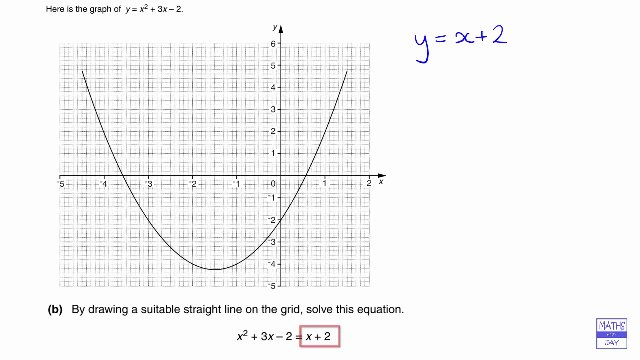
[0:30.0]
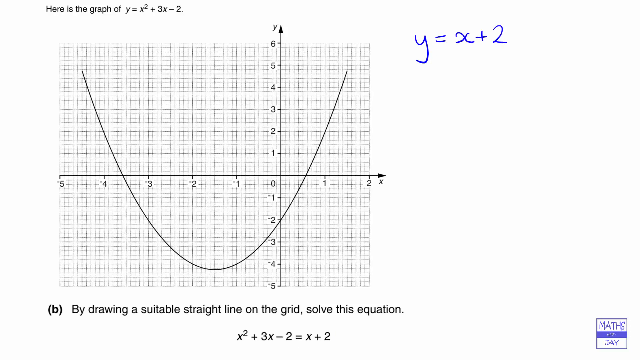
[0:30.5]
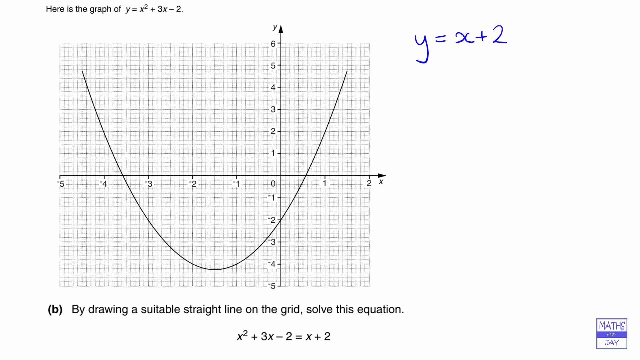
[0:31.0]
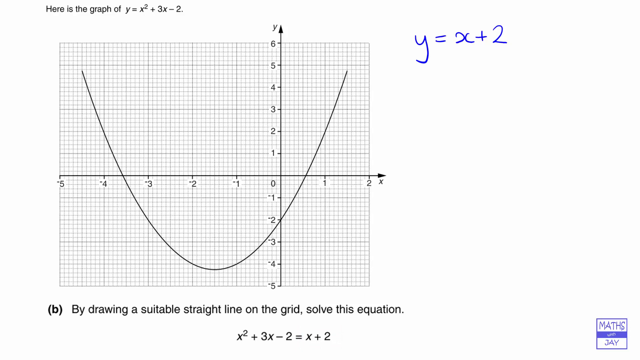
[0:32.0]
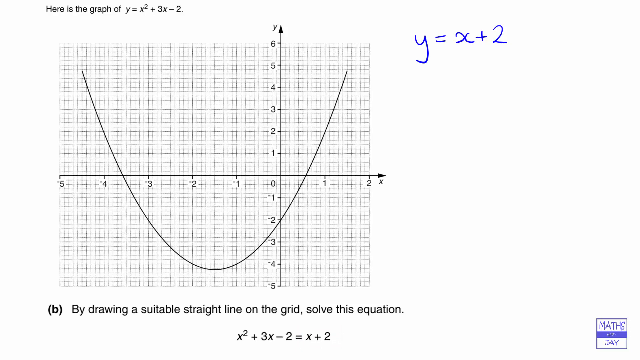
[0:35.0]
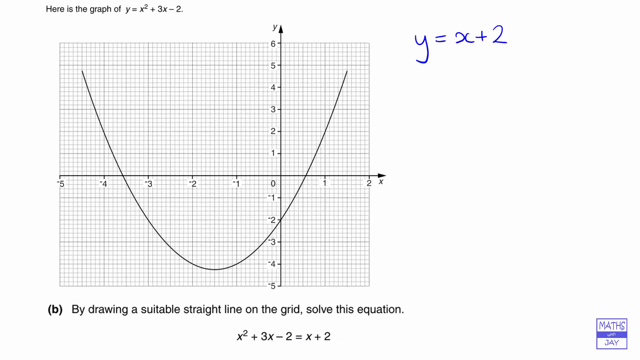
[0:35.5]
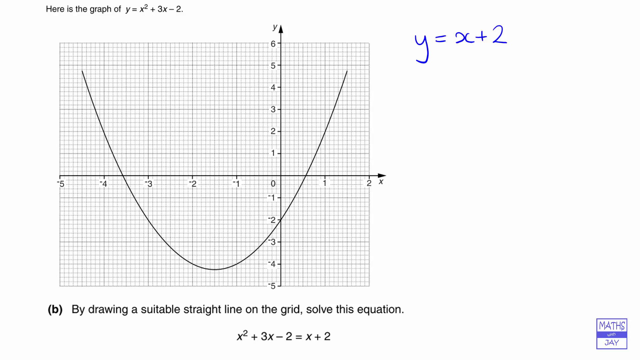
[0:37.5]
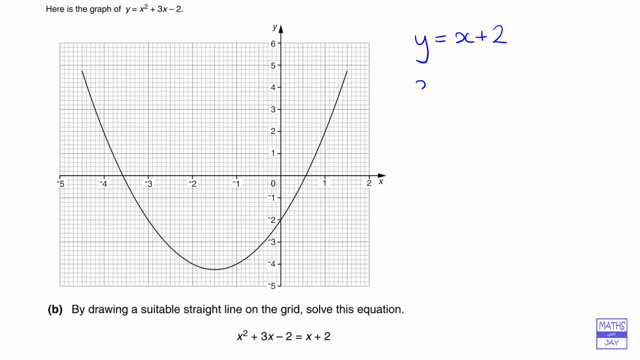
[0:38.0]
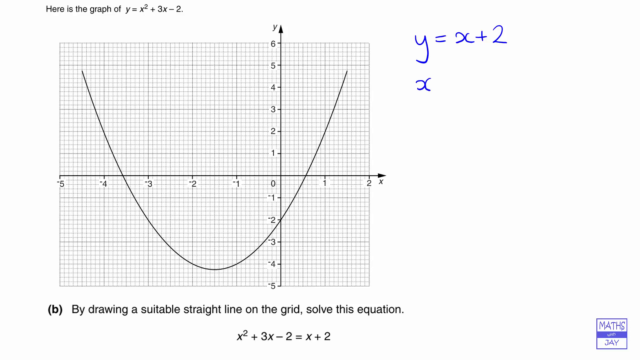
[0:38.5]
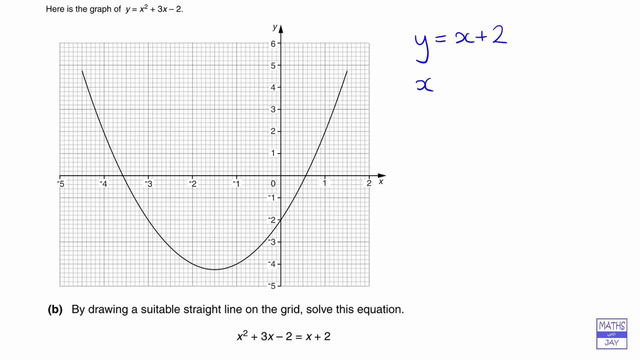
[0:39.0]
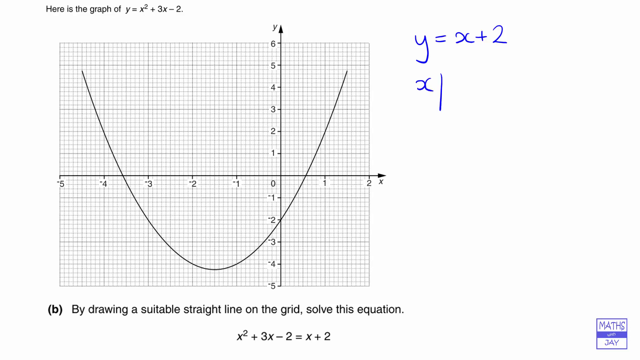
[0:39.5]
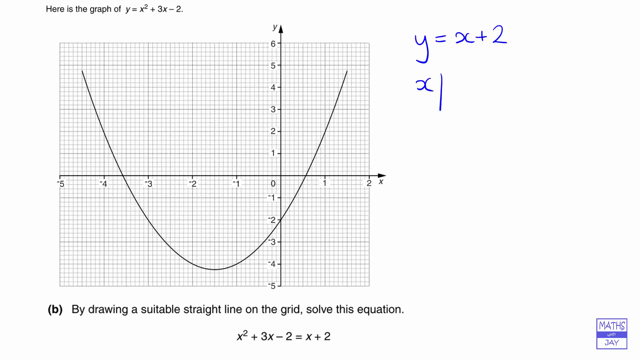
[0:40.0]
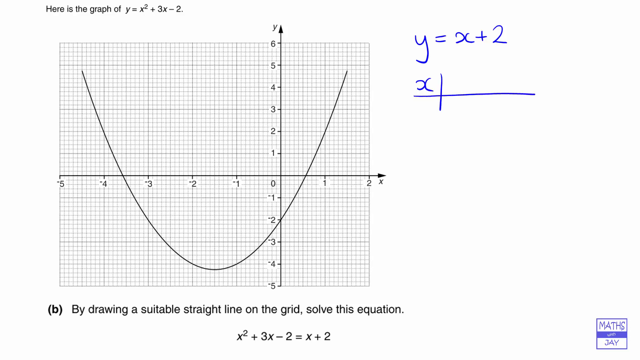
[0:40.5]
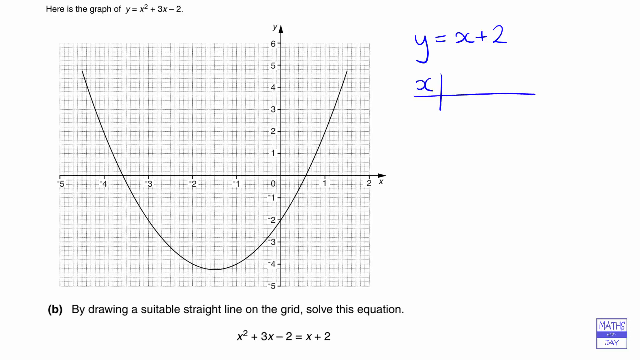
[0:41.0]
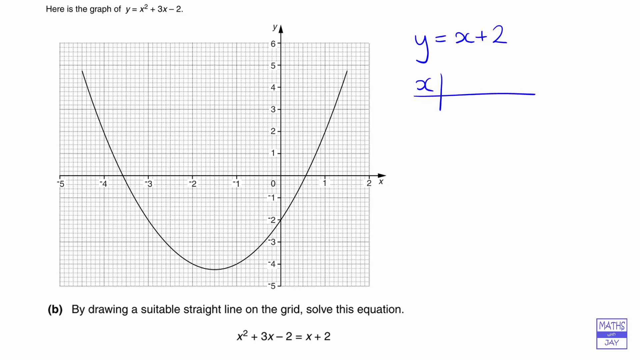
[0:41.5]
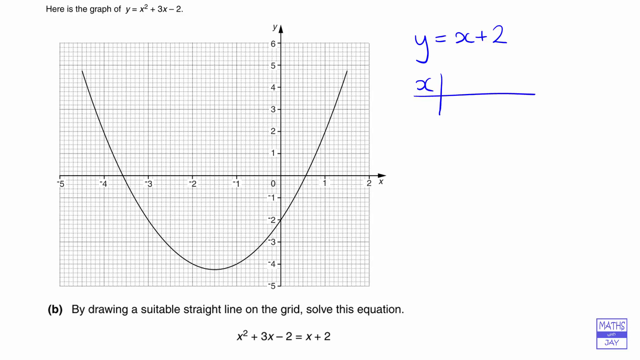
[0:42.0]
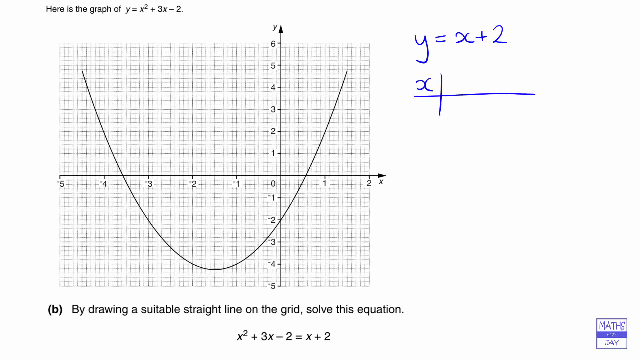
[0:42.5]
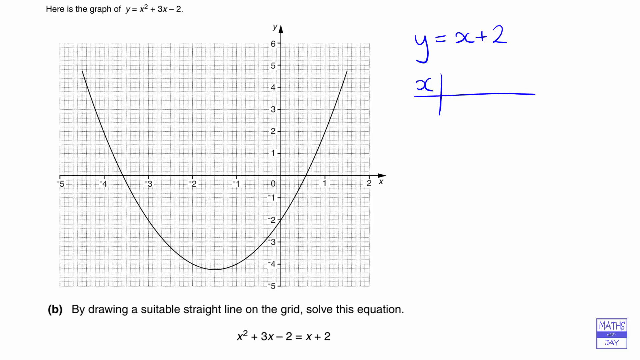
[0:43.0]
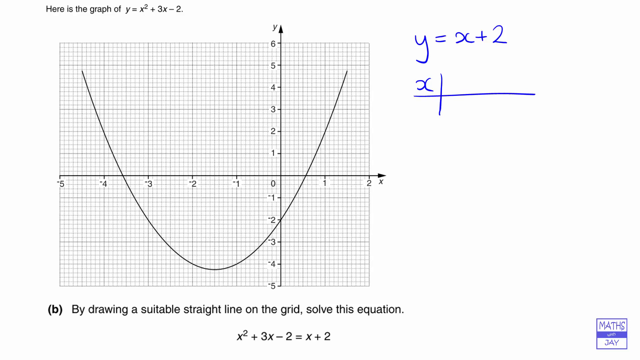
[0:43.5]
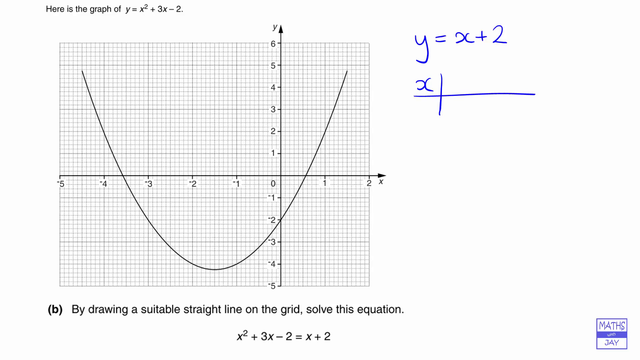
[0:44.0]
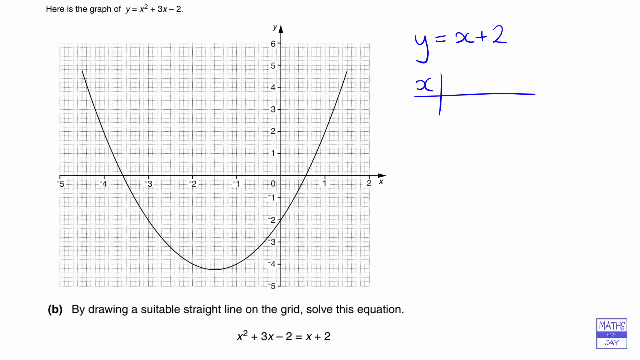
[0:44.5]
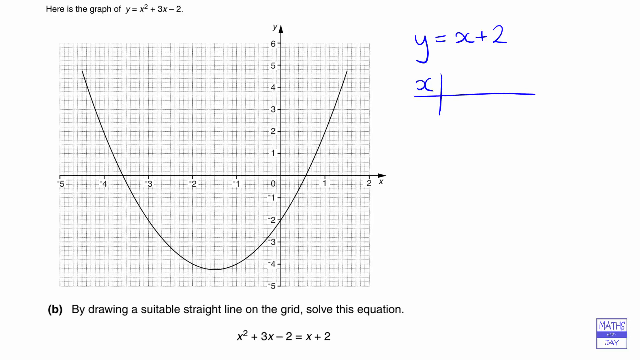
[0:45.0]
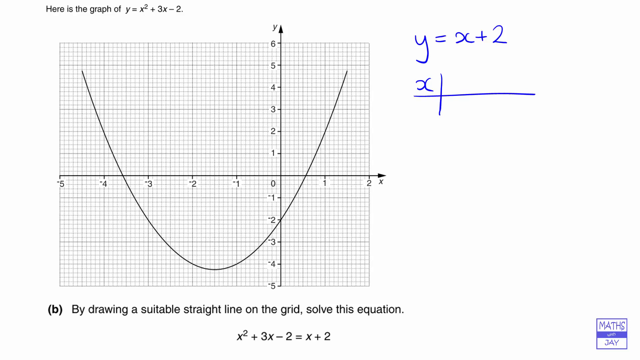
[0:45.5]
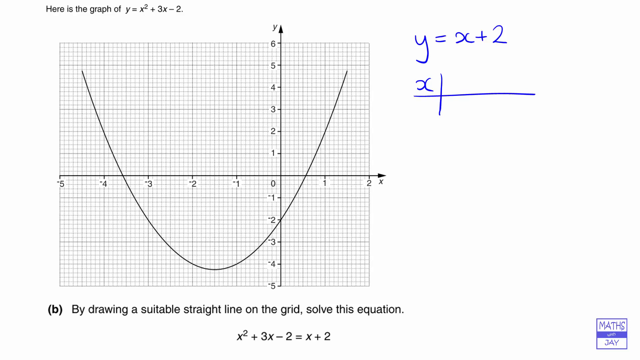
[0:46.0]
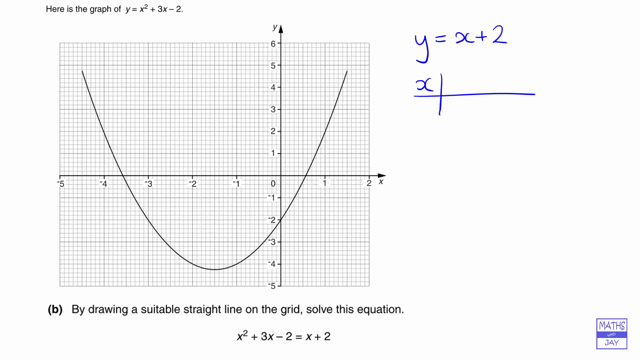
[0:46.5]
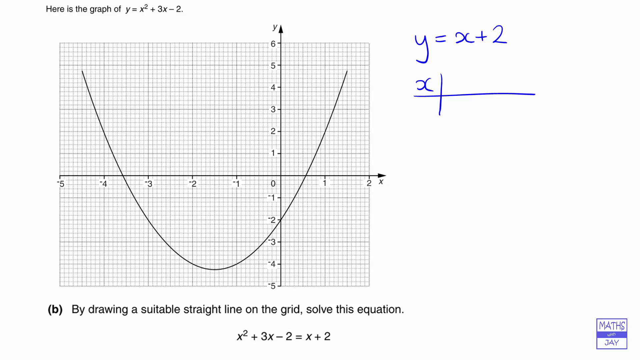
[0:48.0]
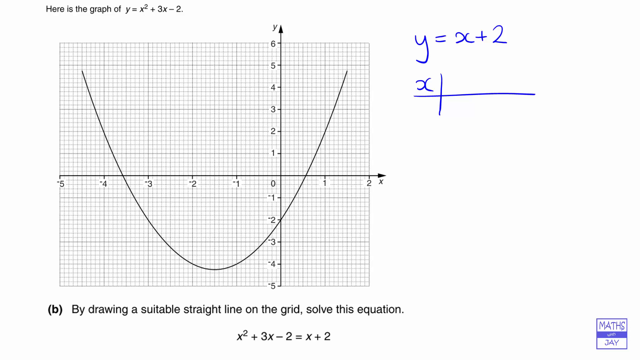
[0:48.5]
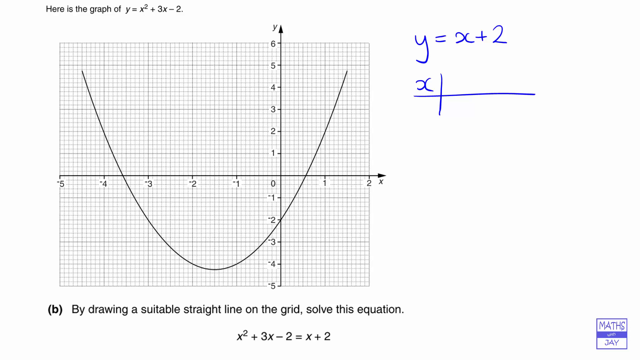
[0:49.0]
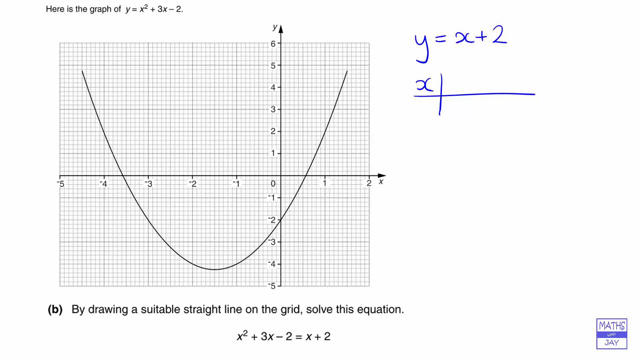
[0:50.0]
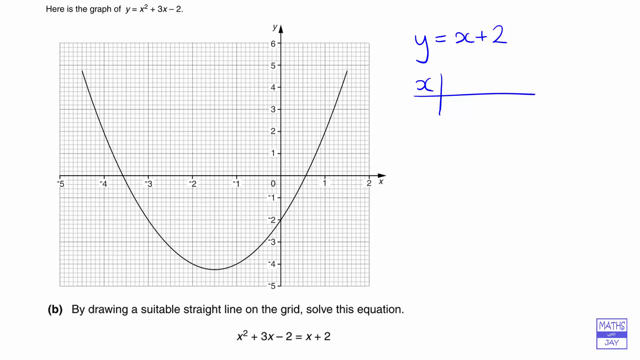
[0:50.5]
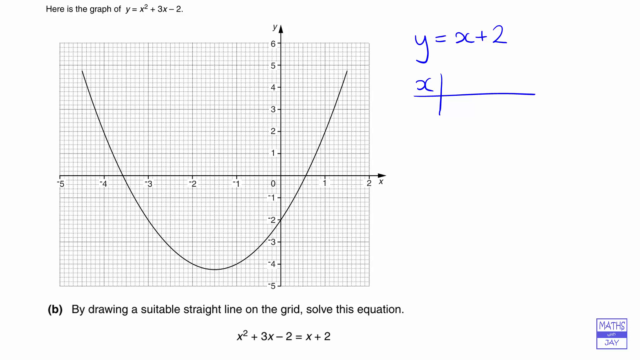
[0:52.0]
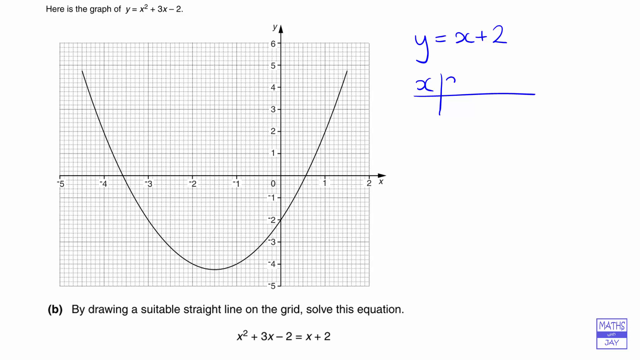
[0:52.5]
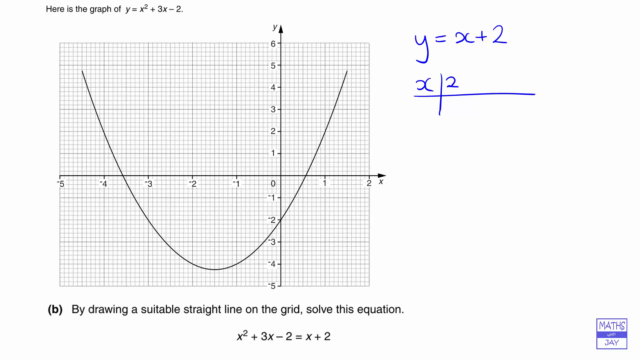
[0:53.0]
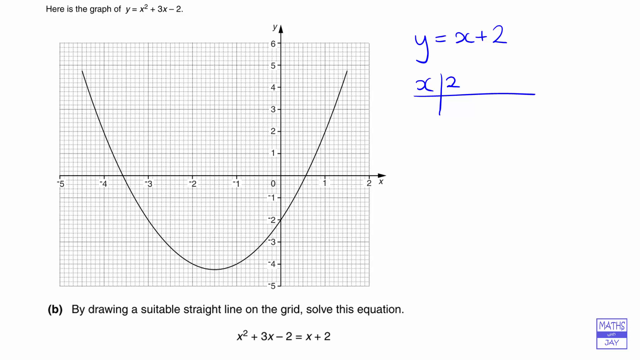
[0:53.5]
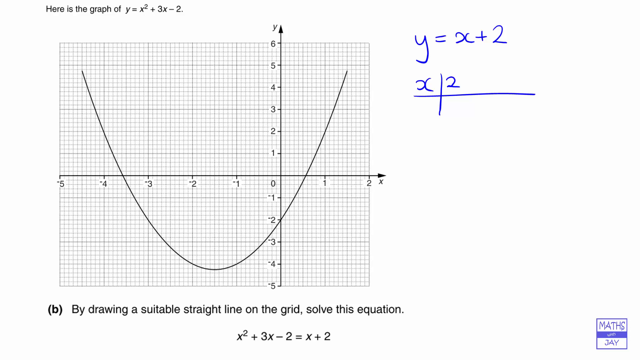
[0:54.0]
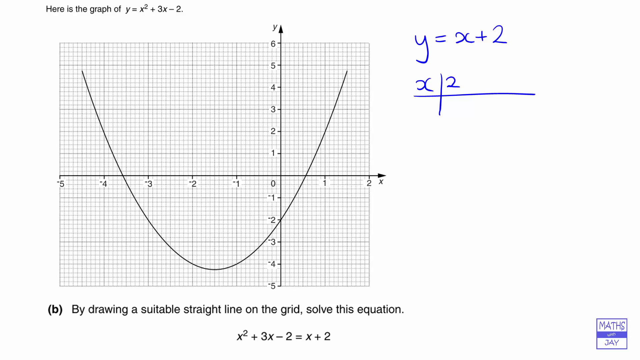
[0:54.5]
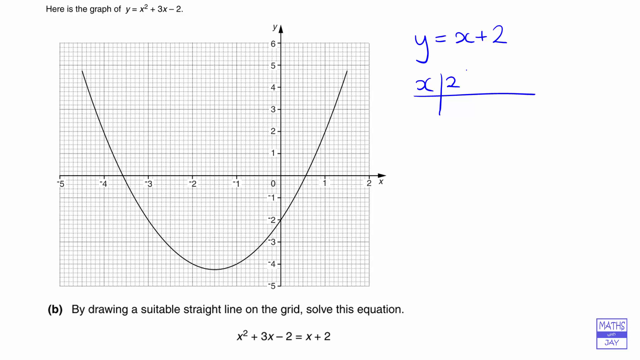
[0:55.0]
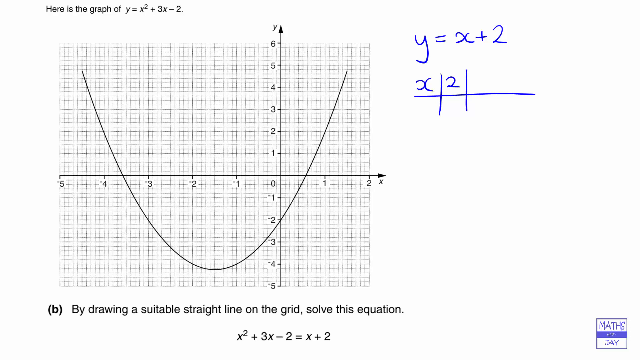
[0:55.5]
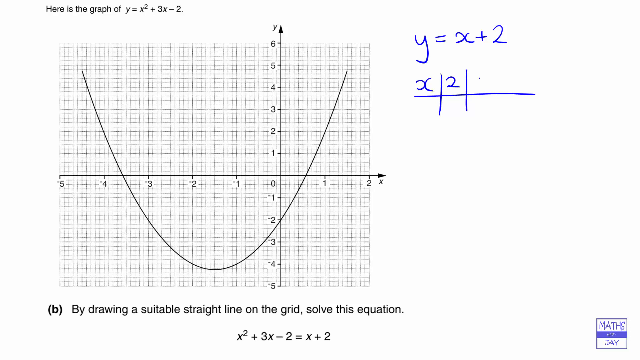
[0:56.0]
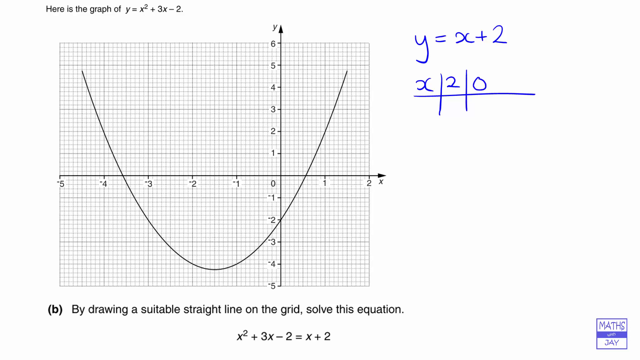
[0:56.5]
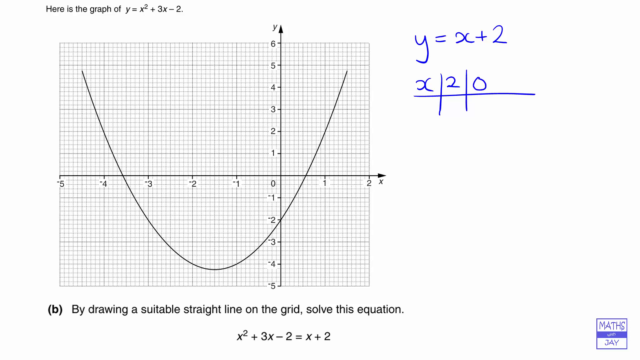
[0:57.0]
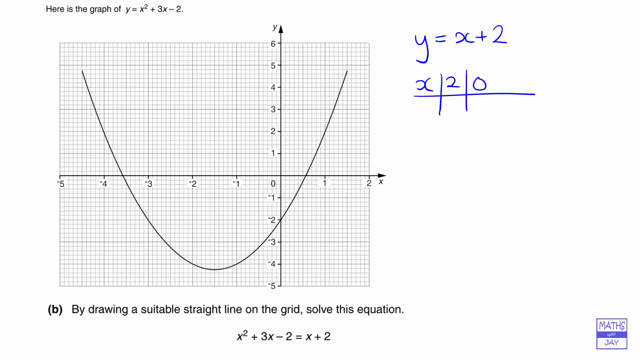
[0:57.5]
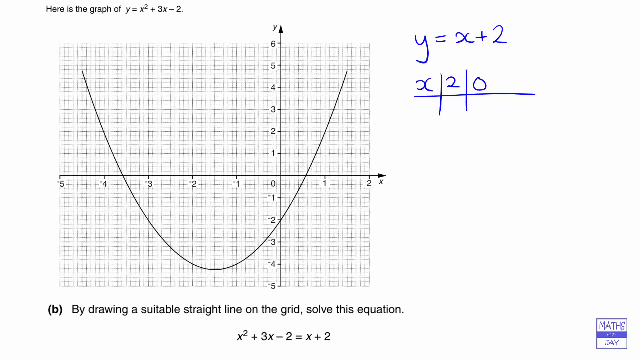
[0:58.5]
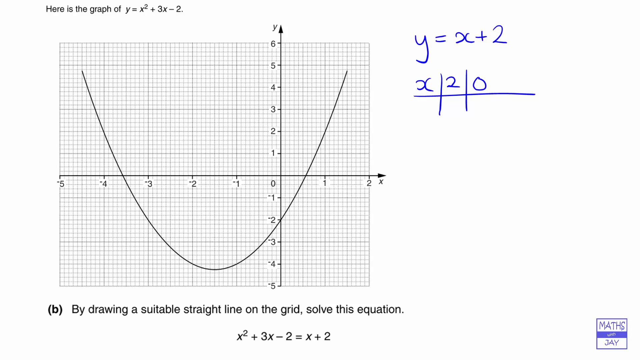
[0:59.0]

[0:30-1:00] In the top right corner of the screen, y = x + 2 is written, and an equation appears at the bottom. A table is then drawn with x values 2 and 0.